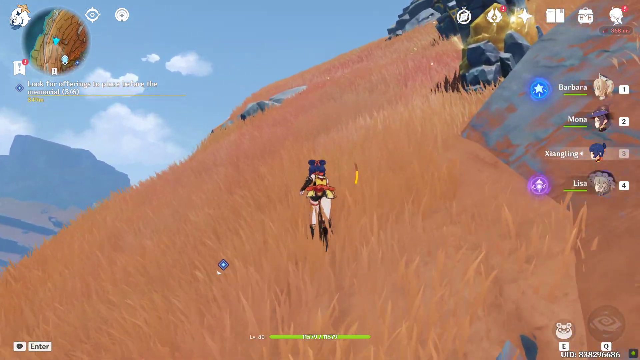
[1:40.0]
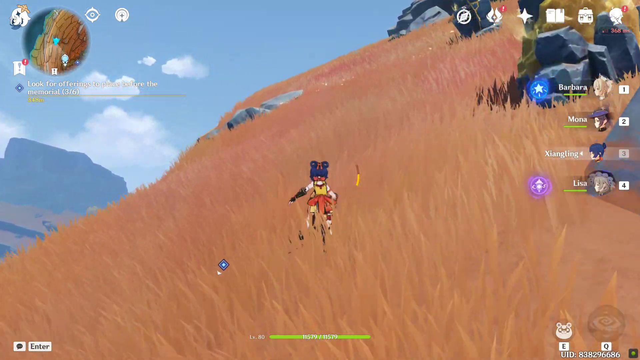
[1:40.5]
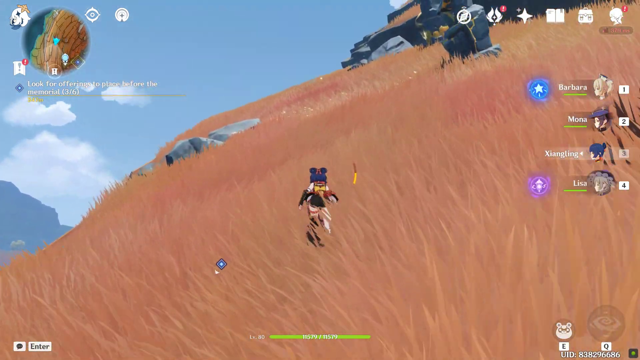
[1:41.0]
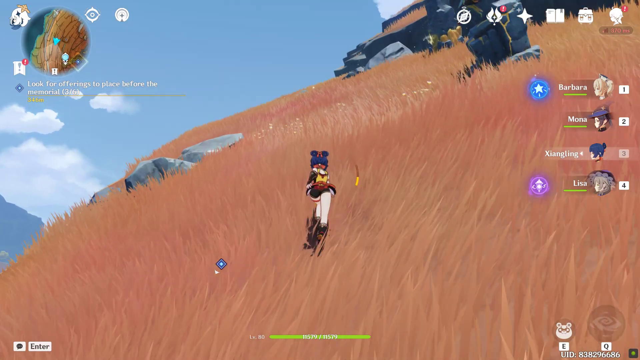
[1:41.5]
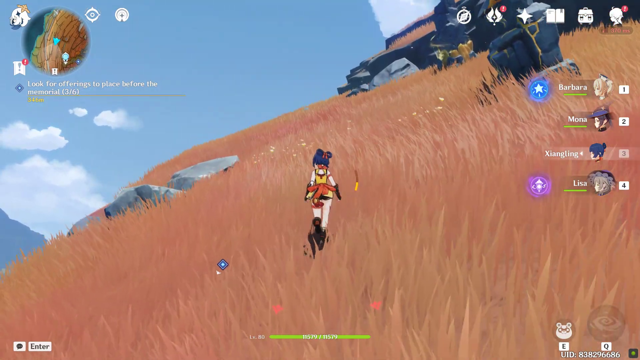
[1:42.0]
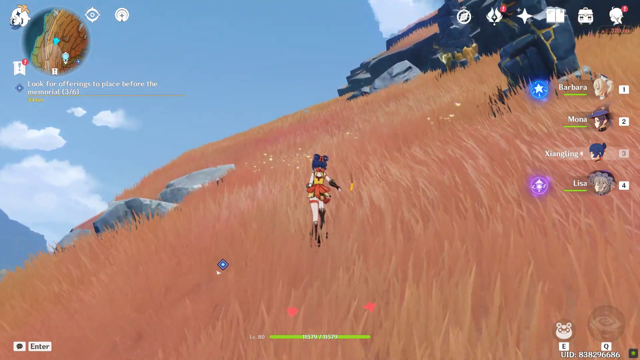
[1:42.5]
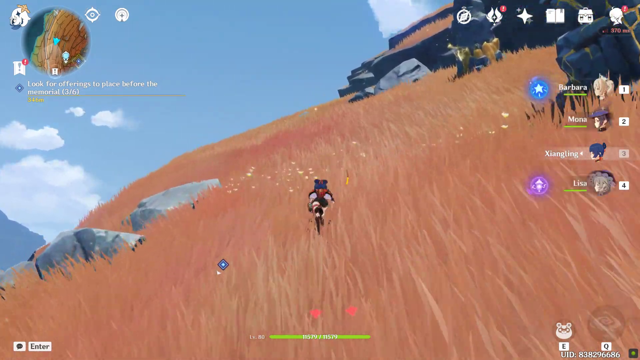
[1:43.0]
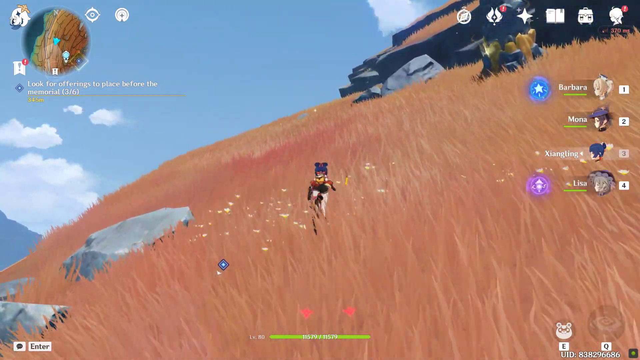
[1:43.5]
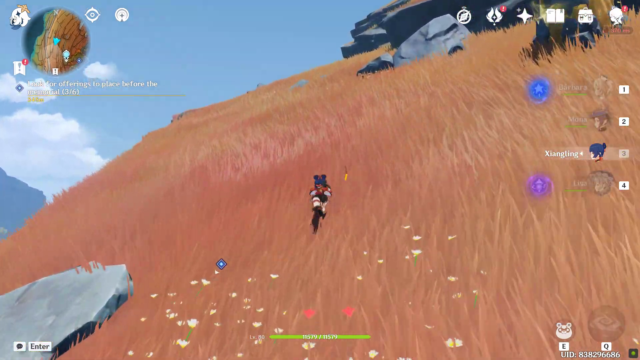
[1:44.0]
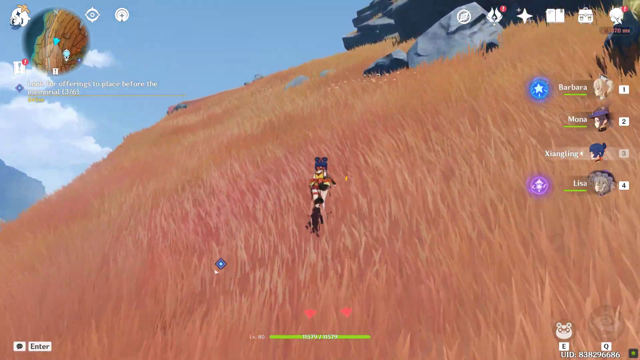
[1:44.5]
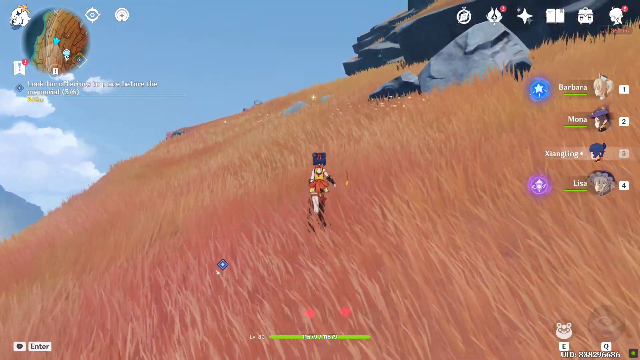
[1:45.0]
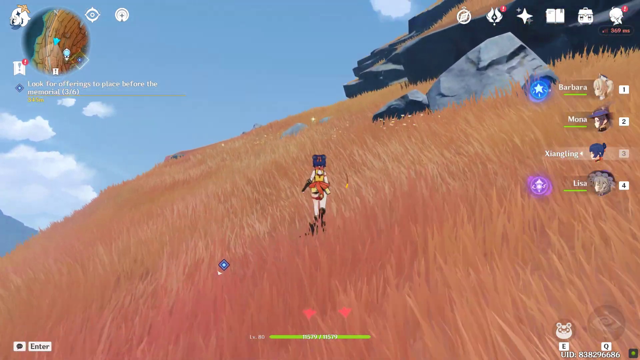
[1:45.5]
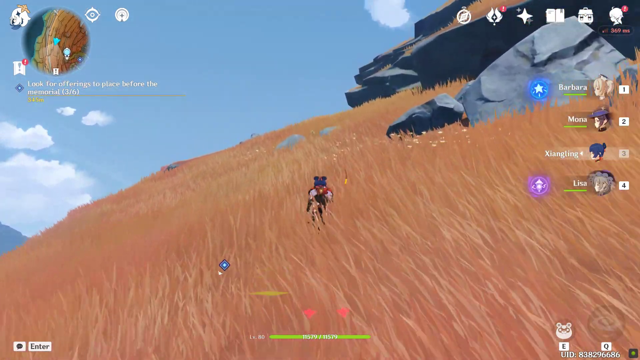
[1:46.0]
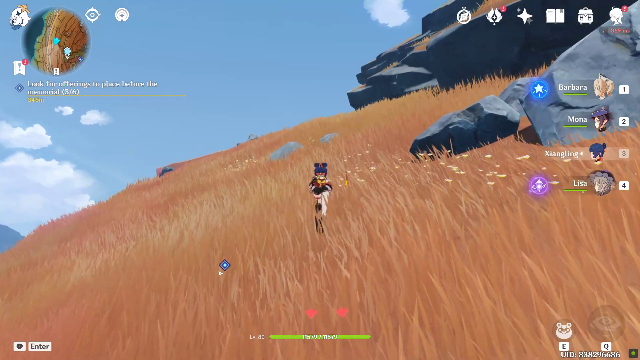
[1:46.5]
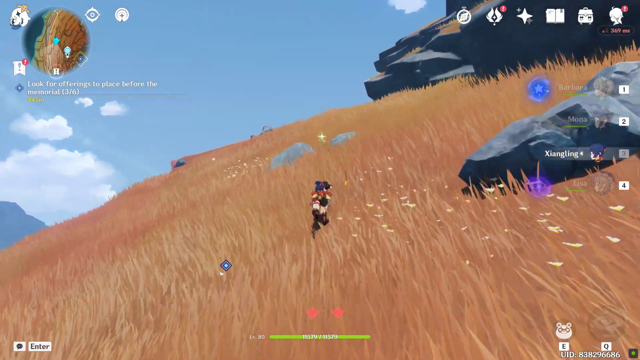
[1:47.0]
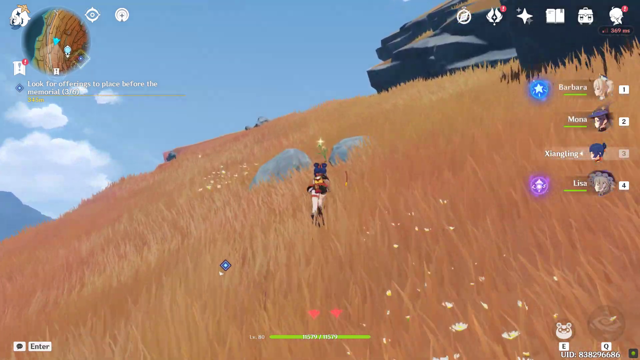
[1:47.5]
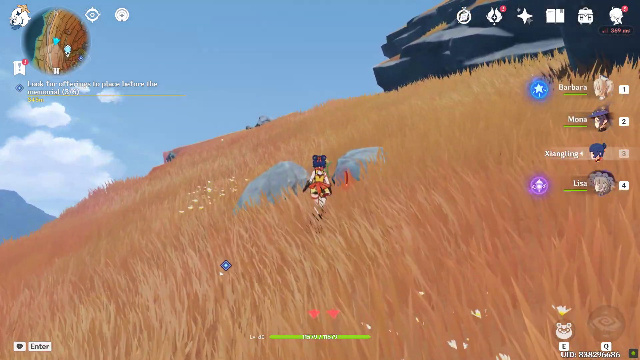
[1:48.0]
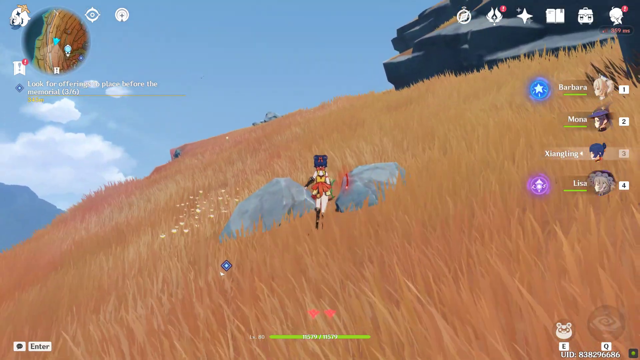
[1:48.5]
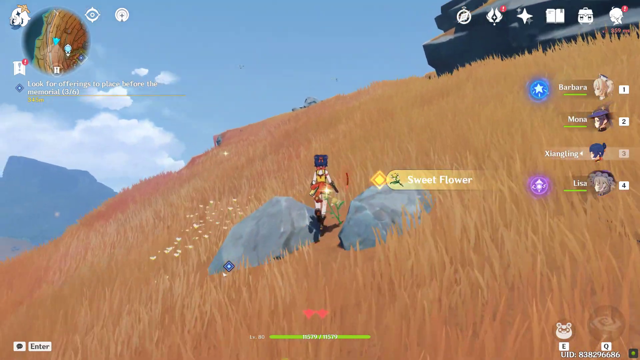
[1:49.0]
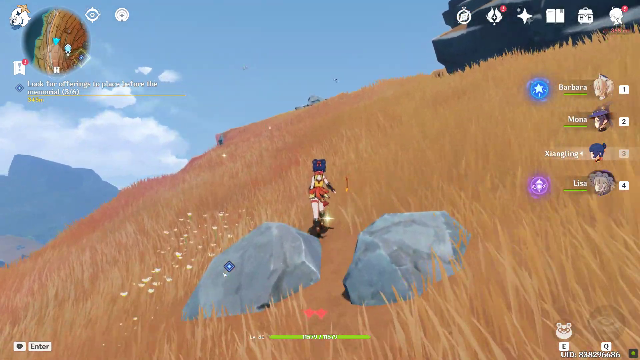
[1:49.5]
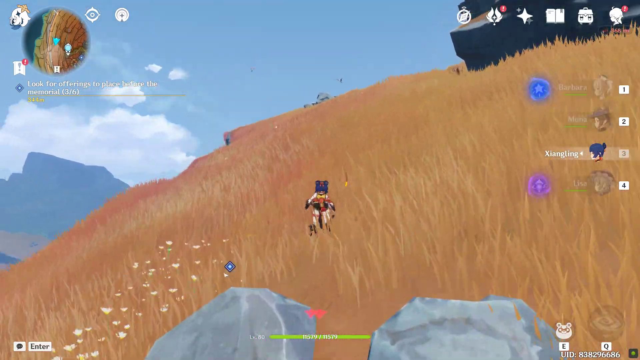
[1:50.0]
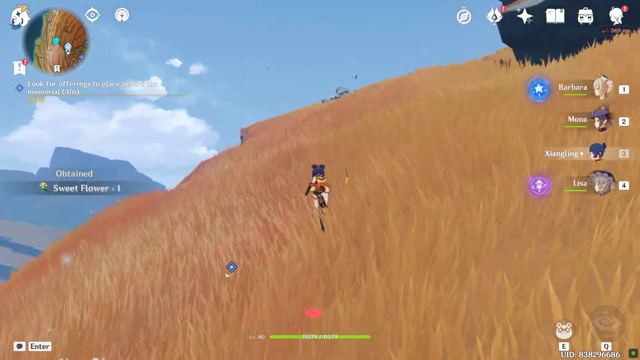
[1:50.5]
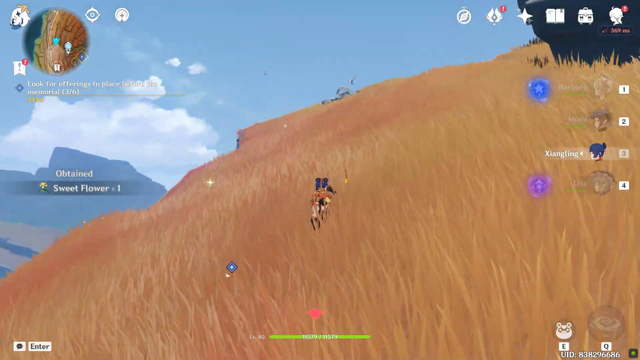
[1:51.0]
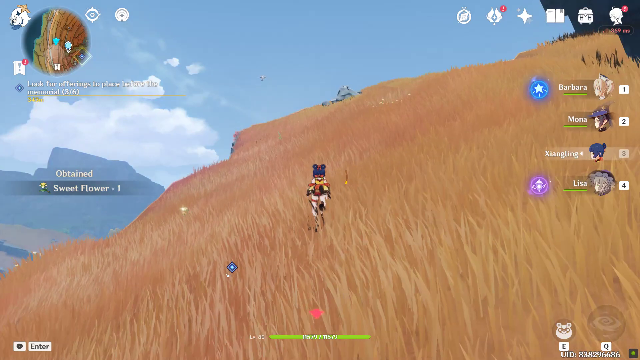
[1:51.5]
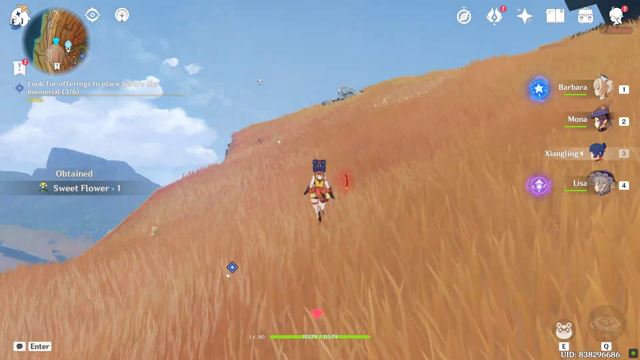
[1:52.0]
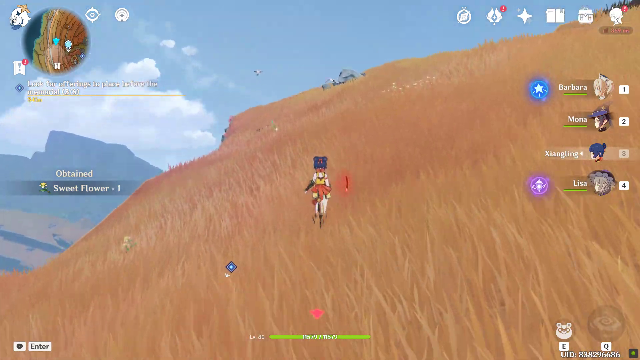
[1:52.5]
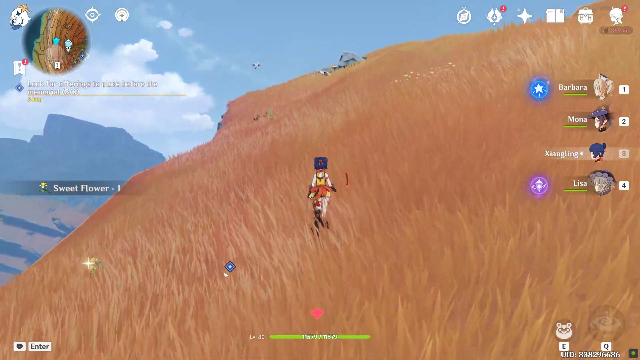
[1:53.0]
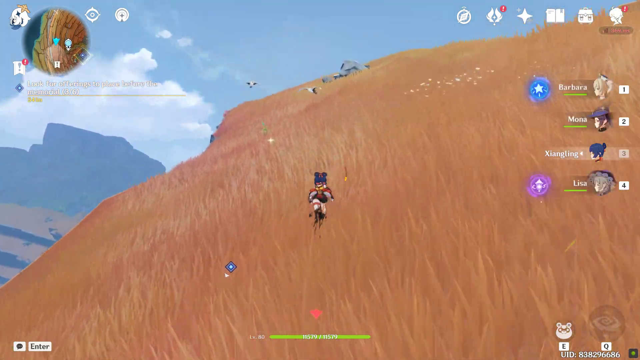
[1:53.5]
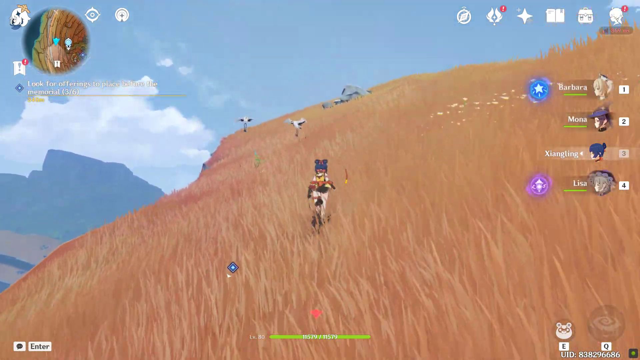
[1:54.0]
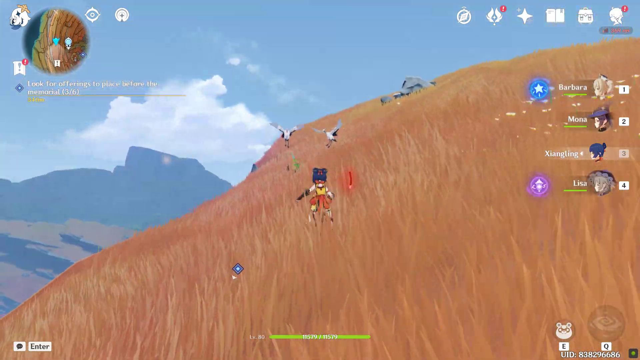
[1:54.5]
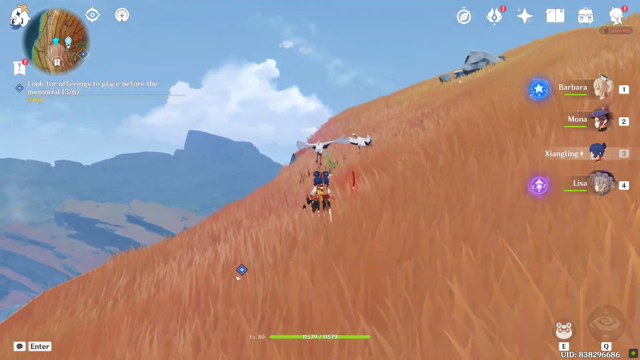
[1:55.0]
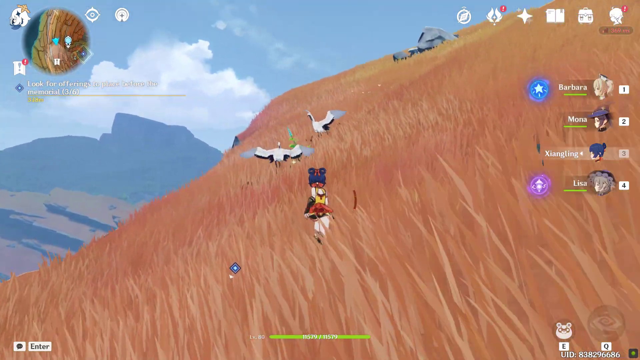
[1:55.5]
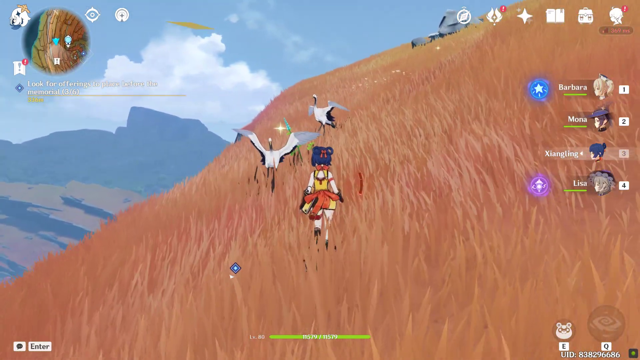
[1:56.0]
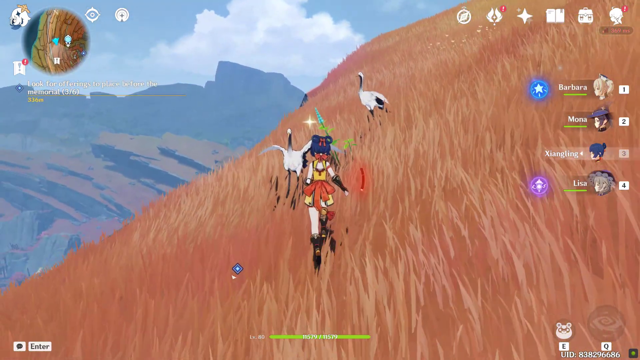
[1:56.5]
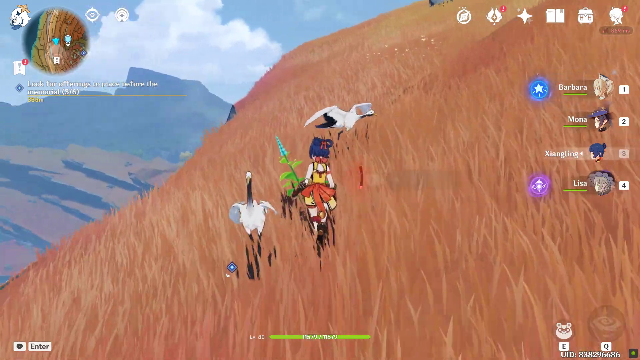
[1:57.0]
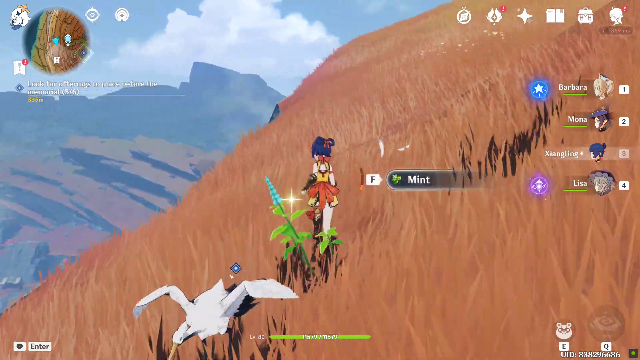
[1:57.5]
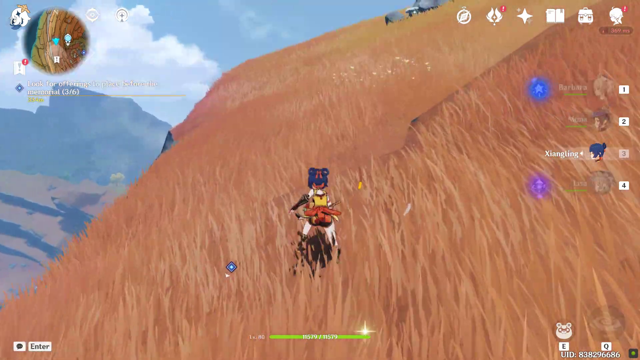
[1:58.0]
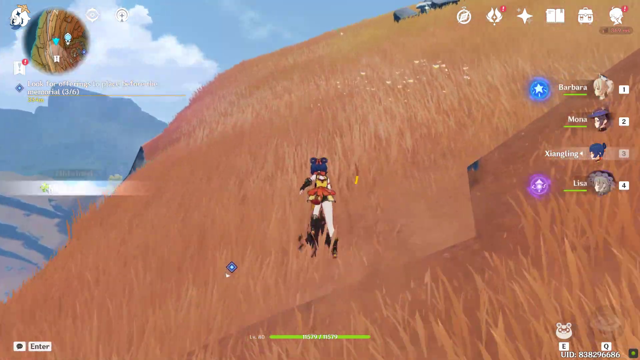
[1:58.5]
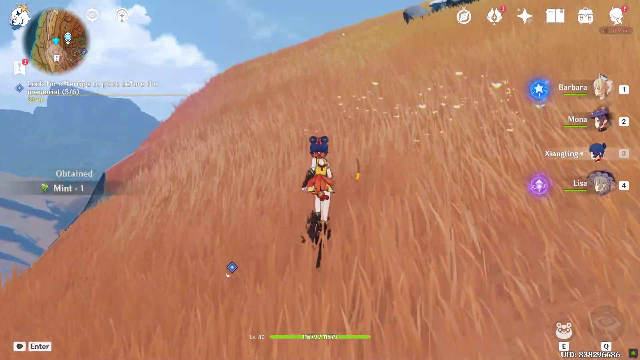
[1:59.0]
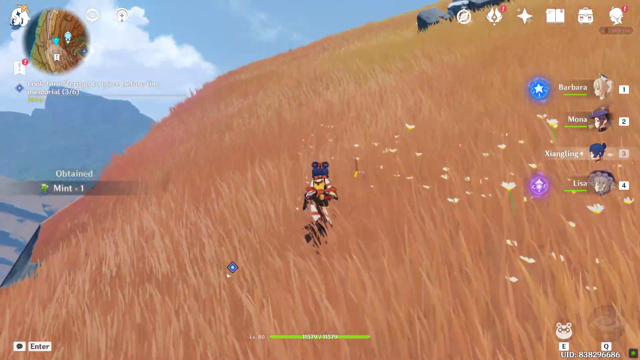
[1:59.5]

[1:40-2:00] She is still running through the reddish-brown terrain and grass. Beside the name of the first character, the blonde-haired Barbara, there is a bluish circle with a star in it, and to the left of the fourth character, Lisa, there is a purple circle with a white thing that looks like some kind of arrow. She runs, then sort of ducks and dives, and appears to pick up something that looks like a yellowish flower; white text on the left reads "Obtained a sweet flower one". She keeps running, and the red stripe forms to her right again. Two big white birds with long necks approach, almost as tall as she is, with black under their tails and black under their chins and necks. She runs on and picks up something, a mint.